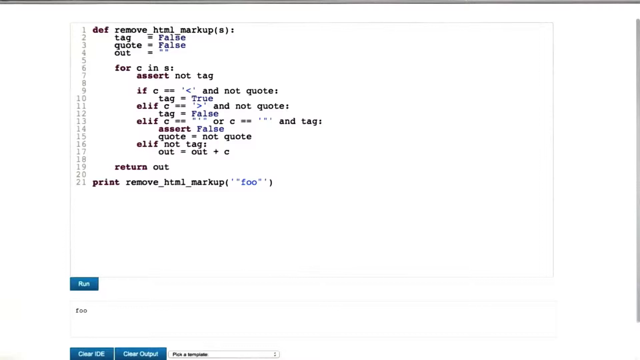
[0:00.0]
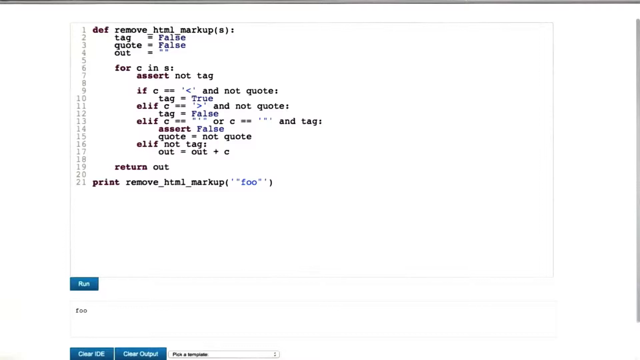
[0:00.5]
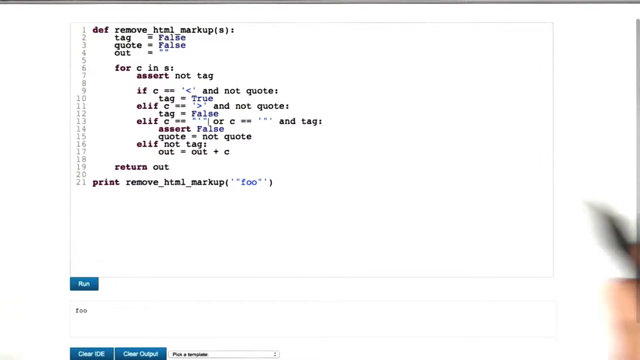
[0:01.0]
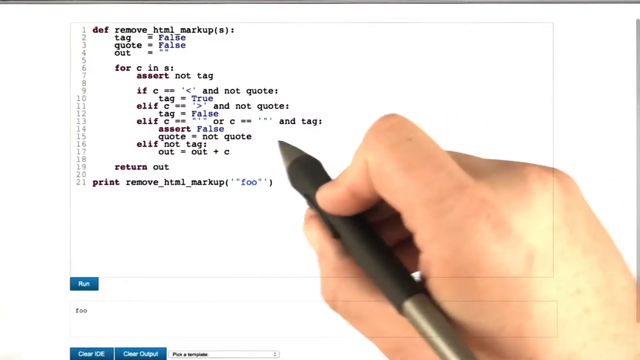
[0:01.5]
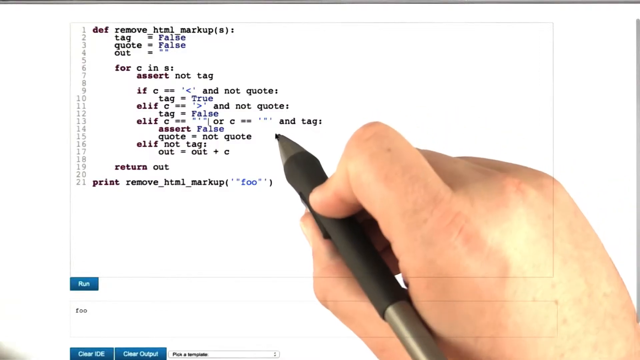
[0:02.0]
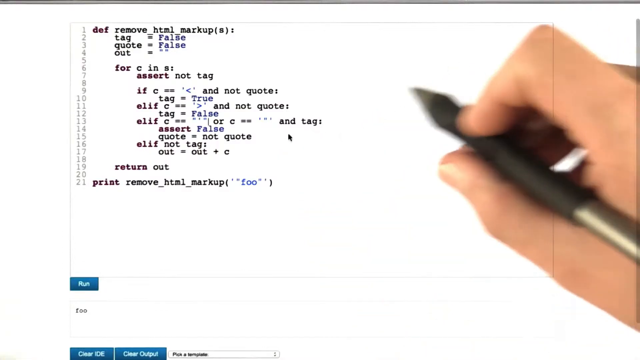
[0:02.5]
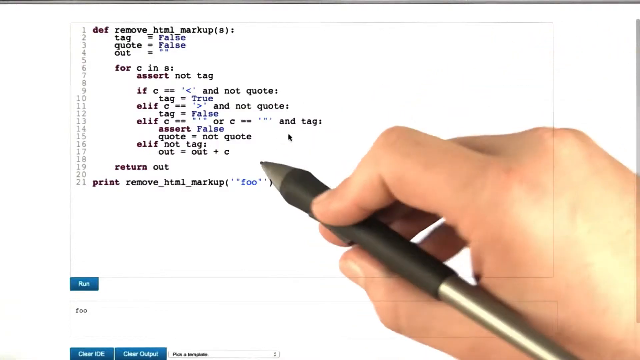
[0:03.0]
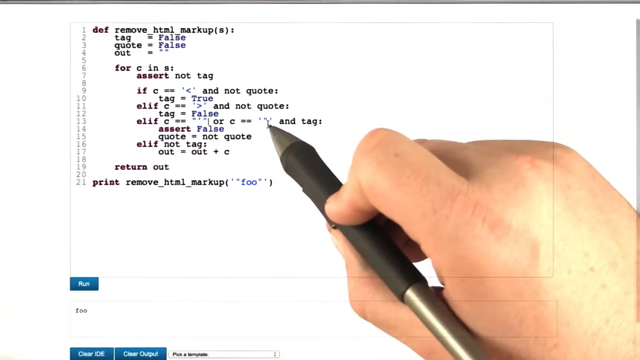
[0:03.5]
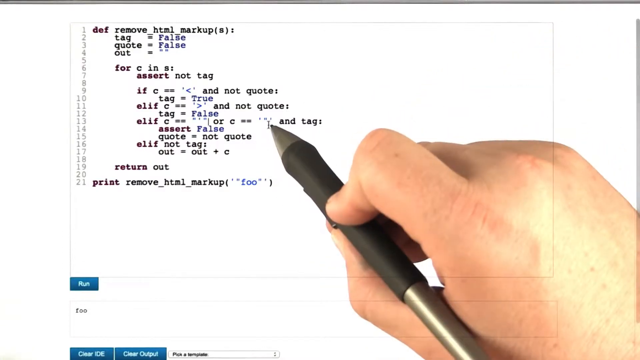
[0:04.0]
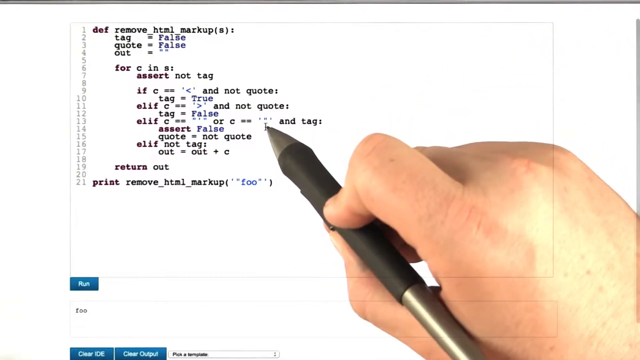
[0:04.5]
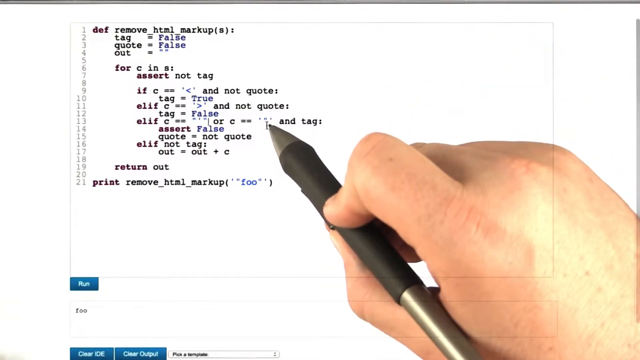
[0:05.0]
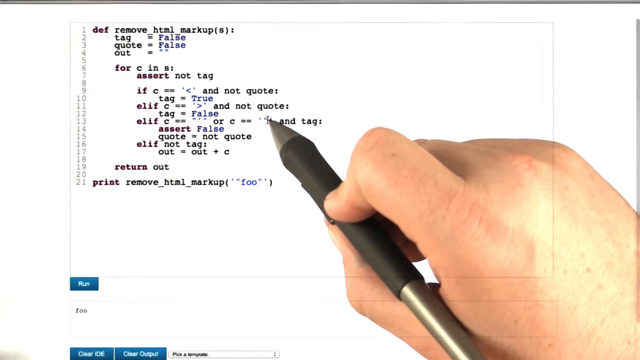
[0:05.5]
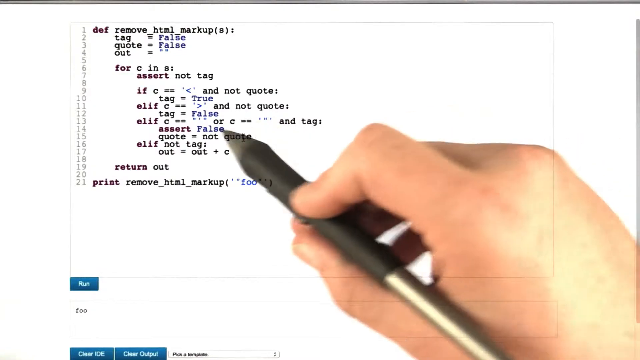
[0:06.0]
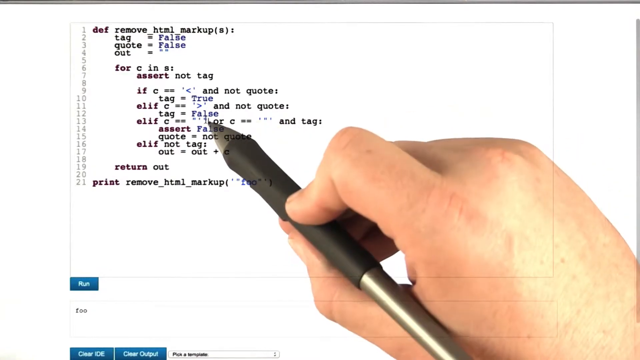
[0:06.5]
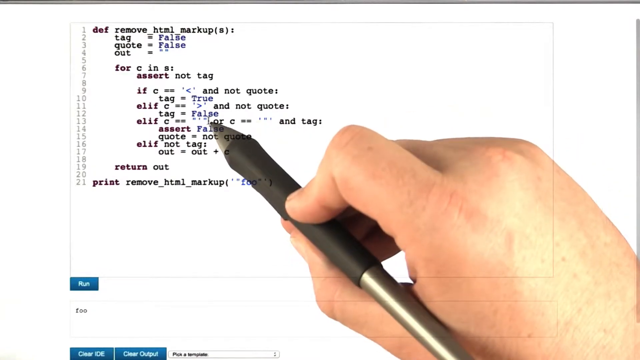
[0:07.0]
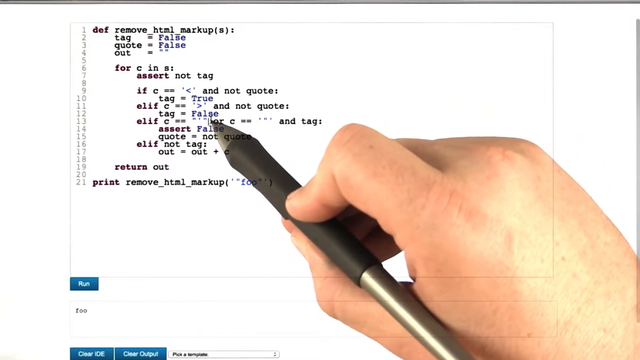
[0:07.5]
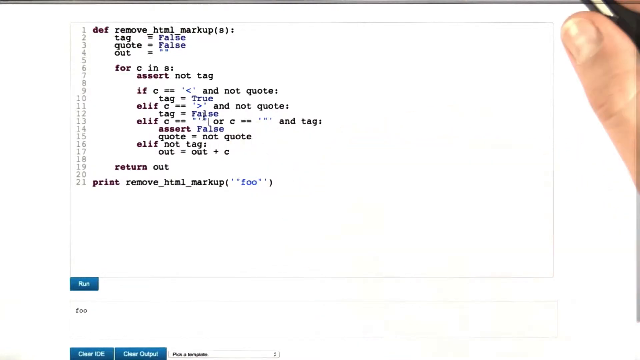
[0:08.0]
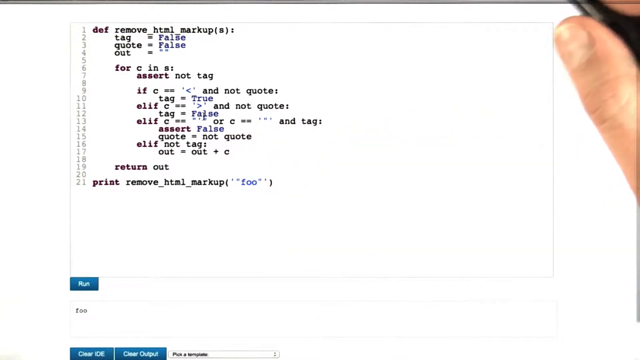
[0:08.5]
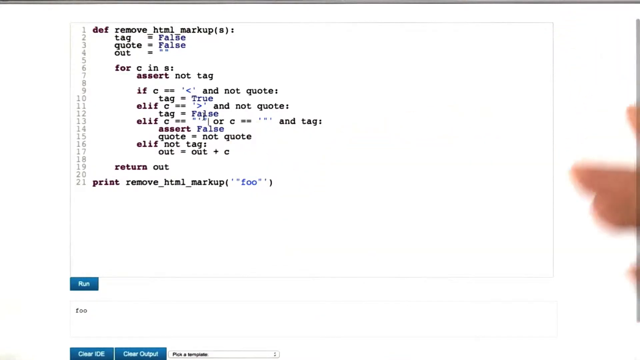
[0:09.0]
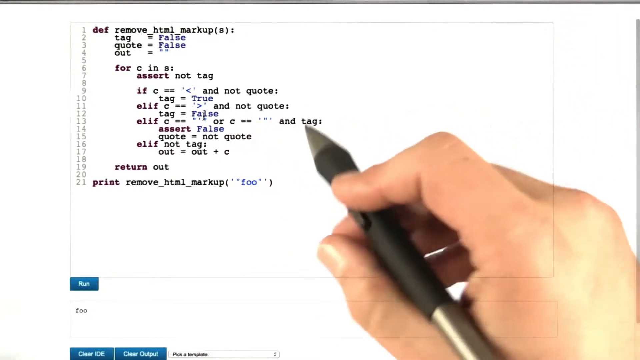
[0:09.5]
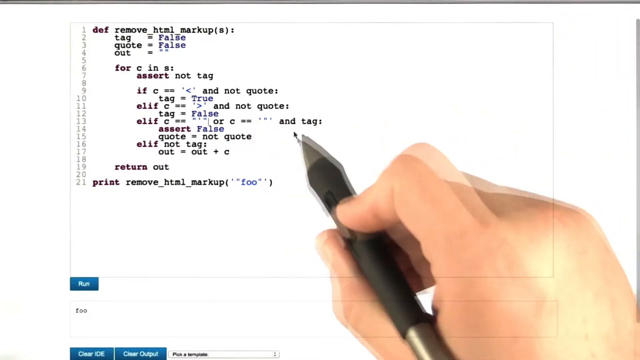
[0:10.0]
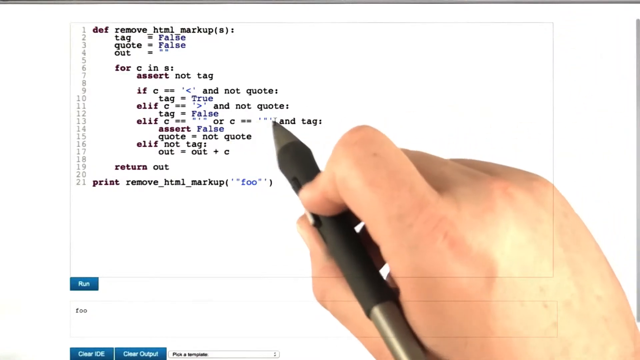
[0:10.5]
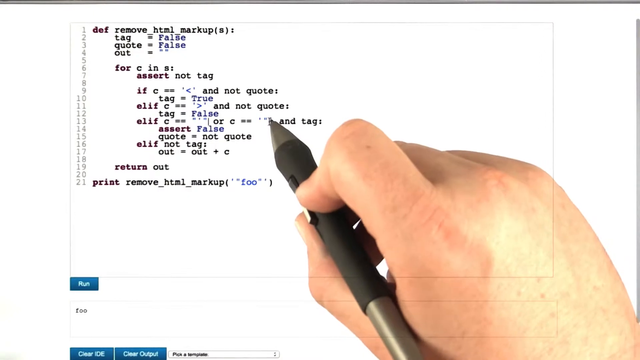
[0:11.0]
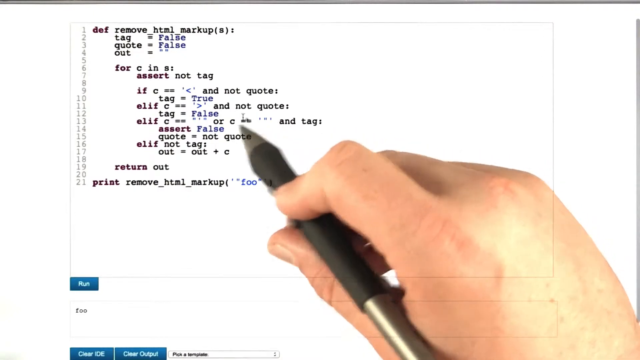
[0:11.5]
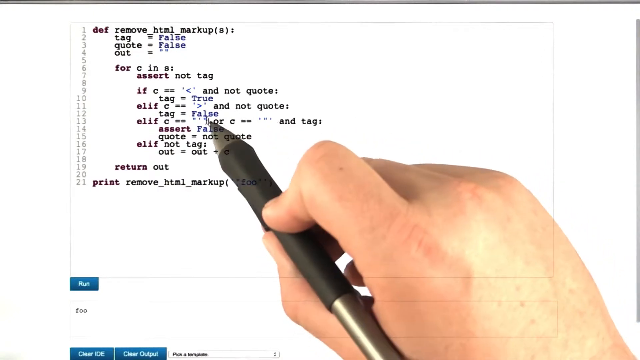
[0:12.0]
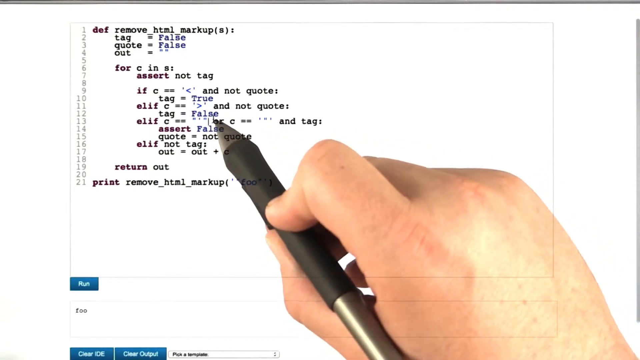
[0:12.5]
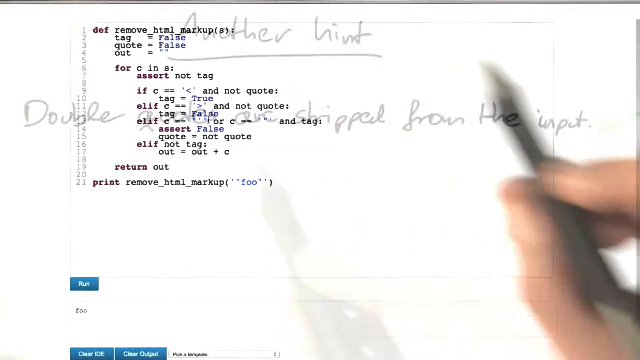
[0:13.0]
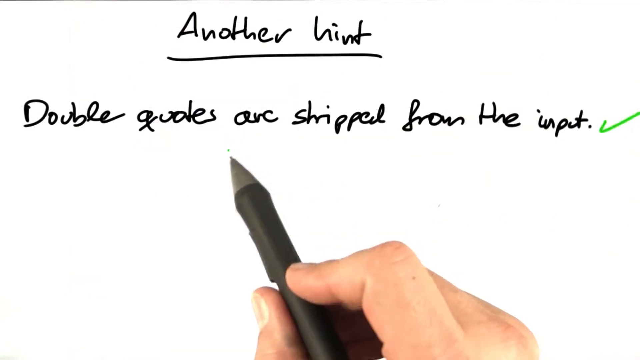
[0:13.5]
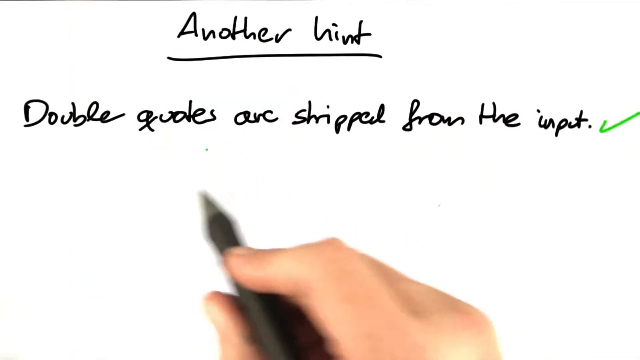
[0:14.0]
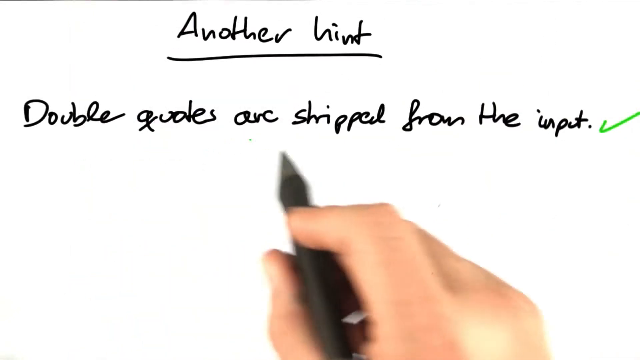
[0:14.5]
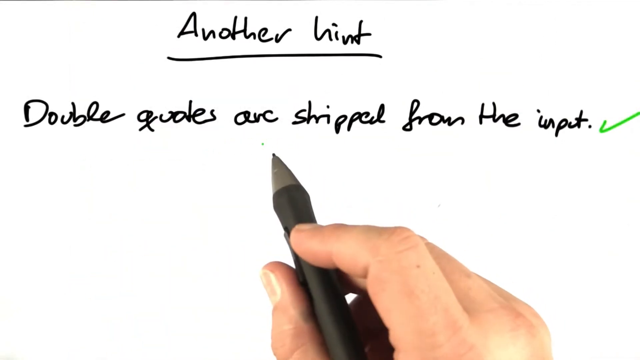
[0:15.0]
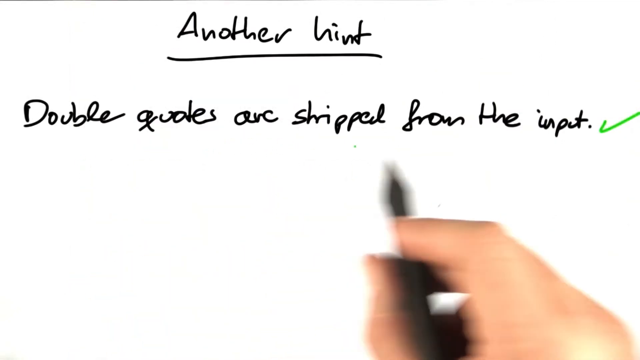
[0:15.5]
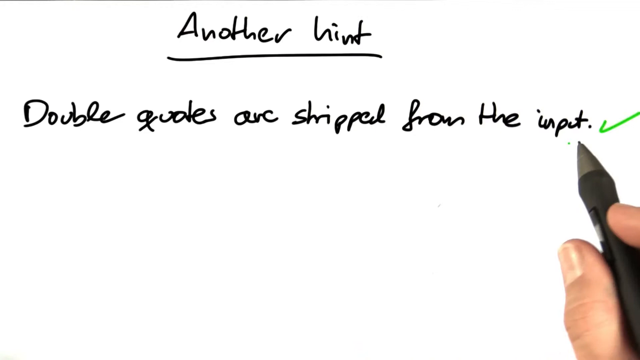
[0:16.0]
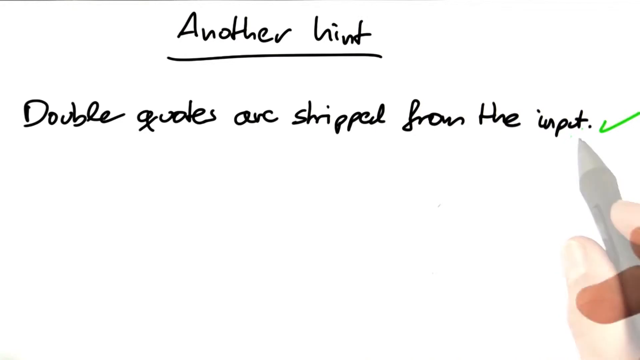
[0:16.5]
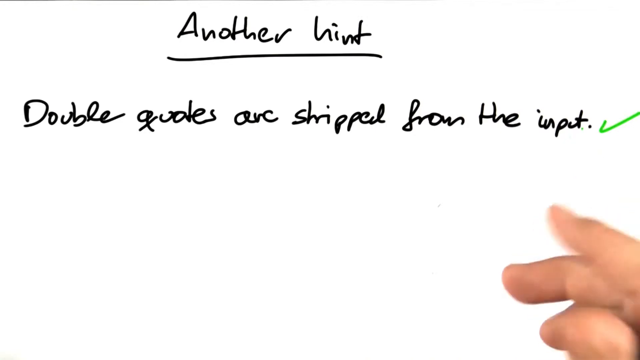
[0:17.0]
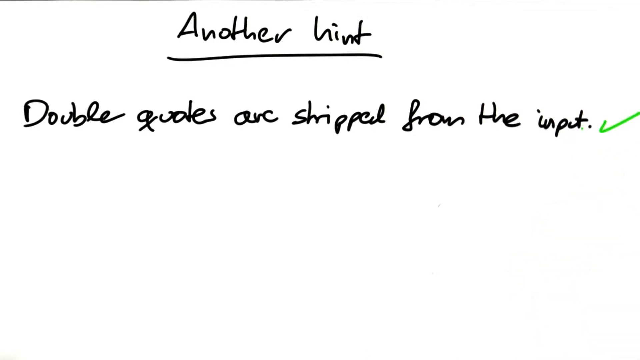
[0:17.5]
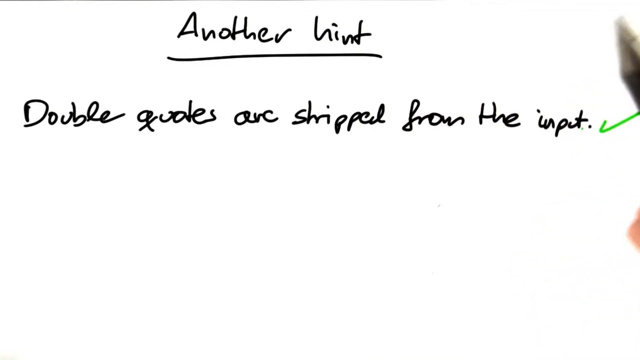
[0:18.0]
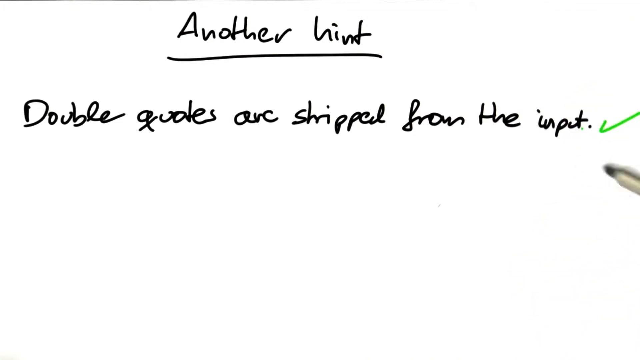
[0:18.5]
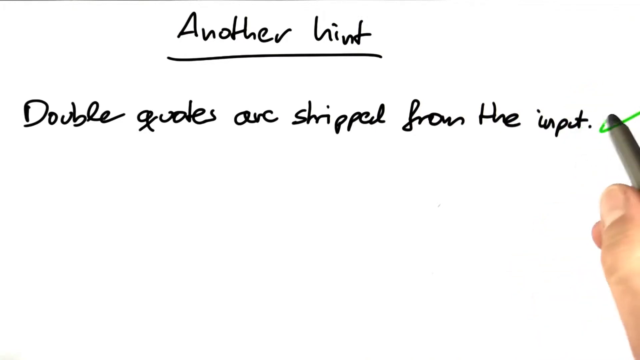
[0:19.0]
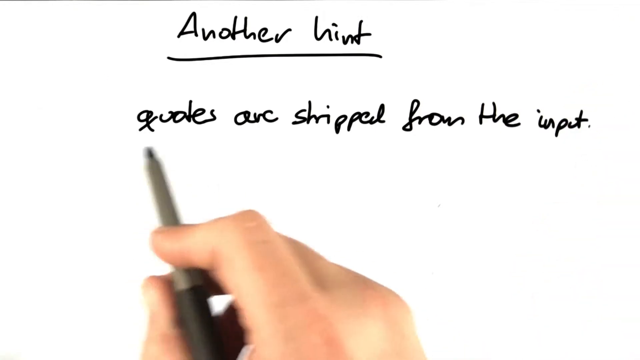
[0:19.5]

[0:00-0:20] A hand writes, apparently working through whether something is true or false. The written content seems to concern what is stripped from the input.